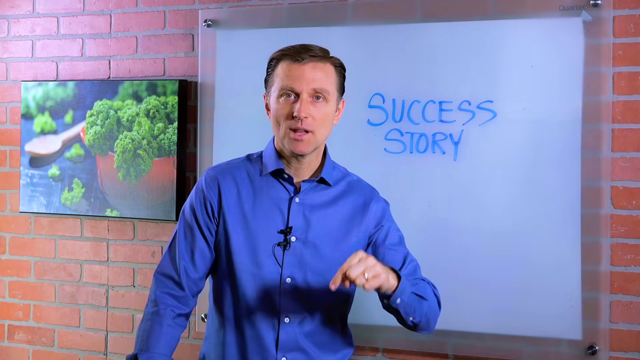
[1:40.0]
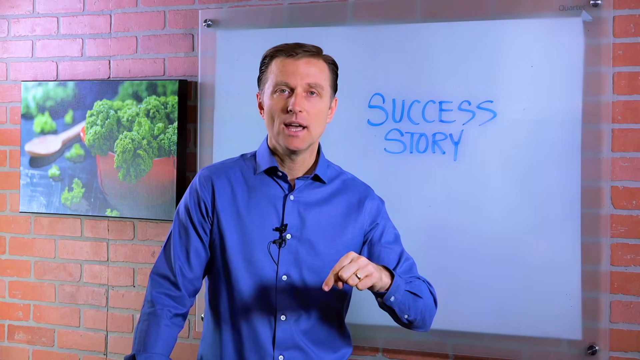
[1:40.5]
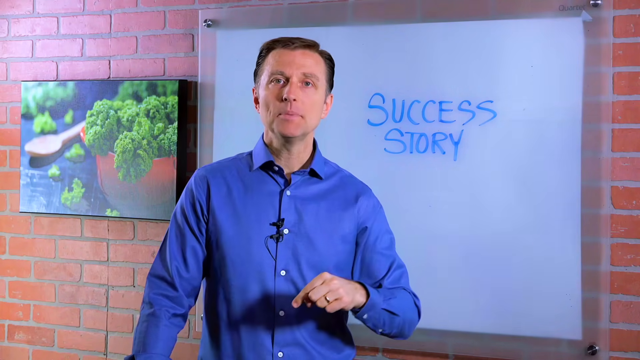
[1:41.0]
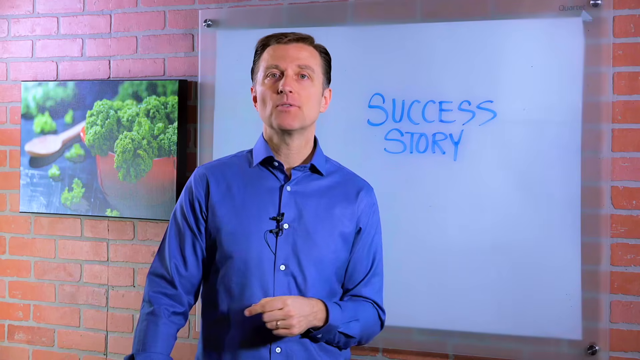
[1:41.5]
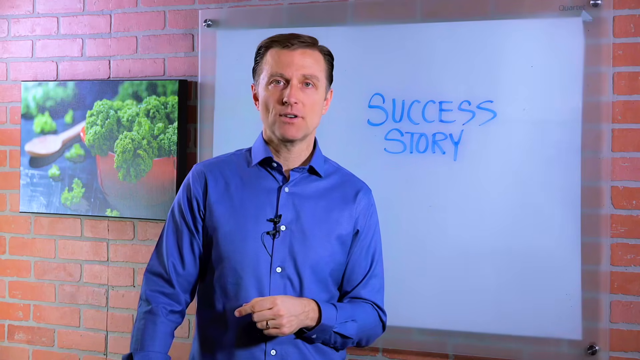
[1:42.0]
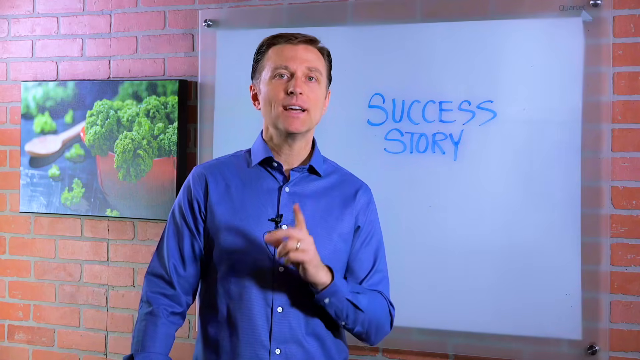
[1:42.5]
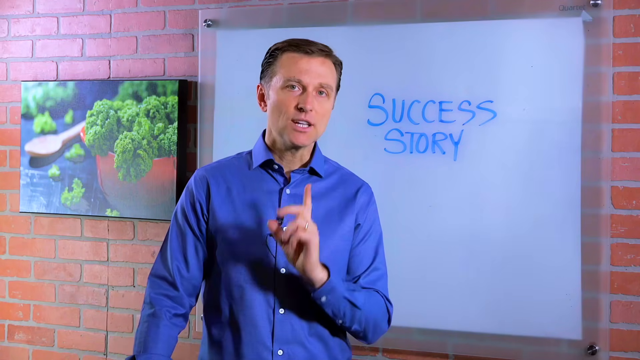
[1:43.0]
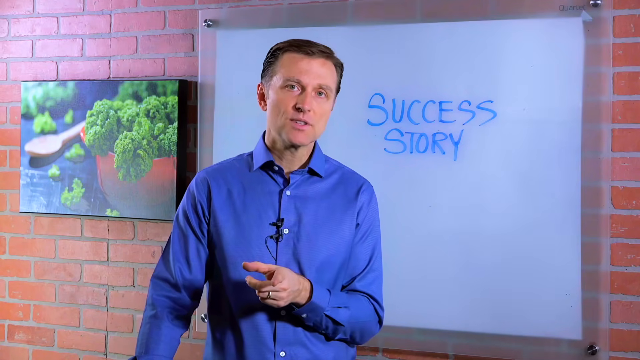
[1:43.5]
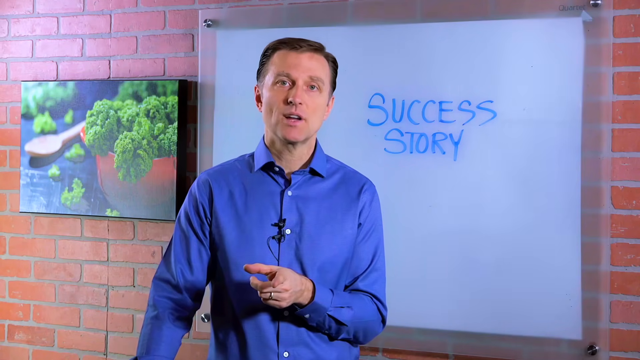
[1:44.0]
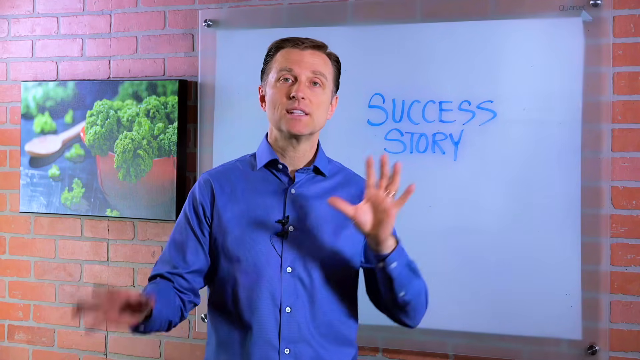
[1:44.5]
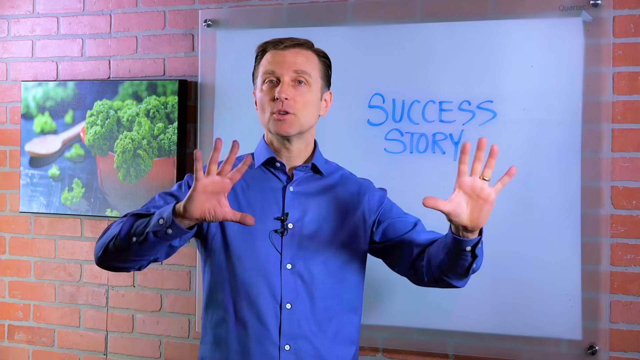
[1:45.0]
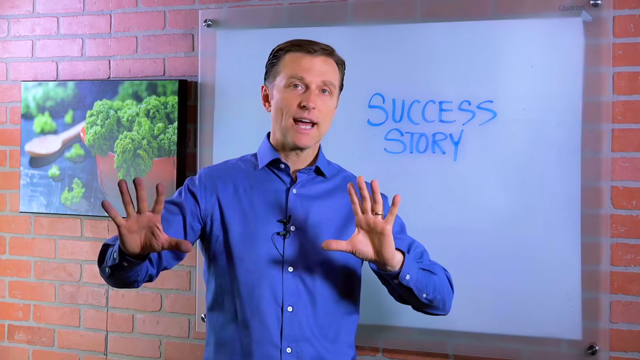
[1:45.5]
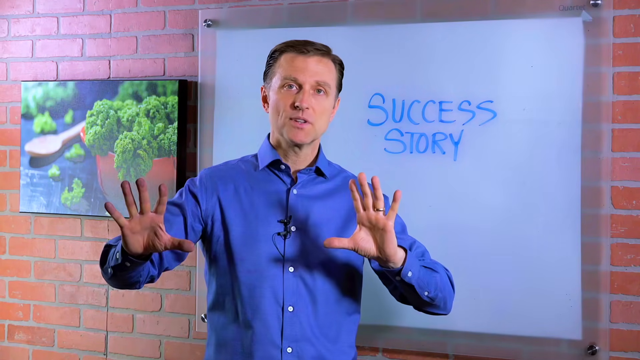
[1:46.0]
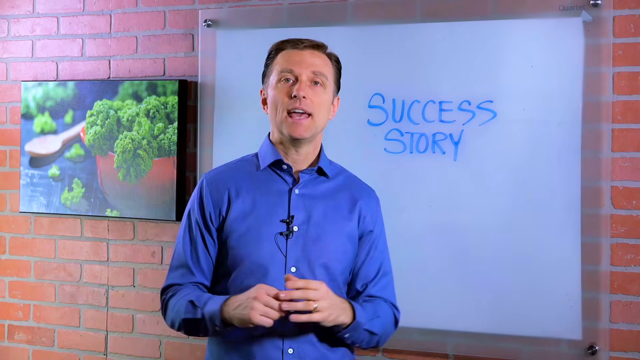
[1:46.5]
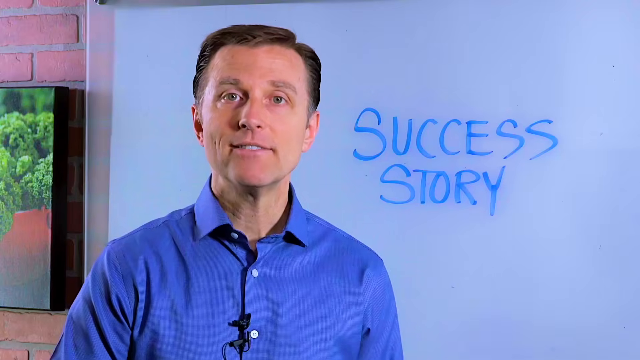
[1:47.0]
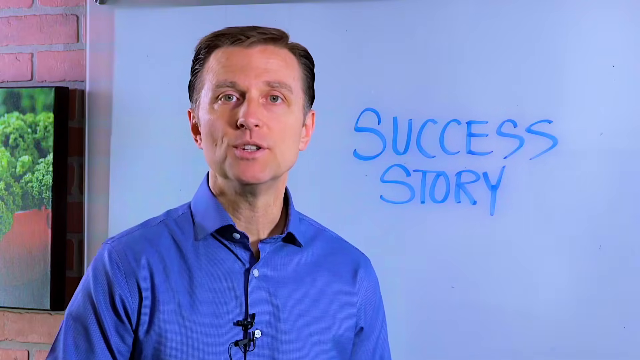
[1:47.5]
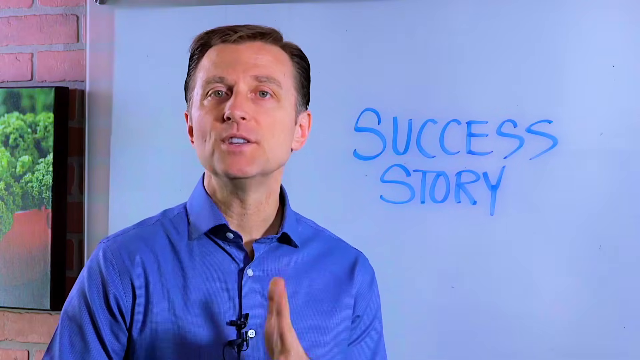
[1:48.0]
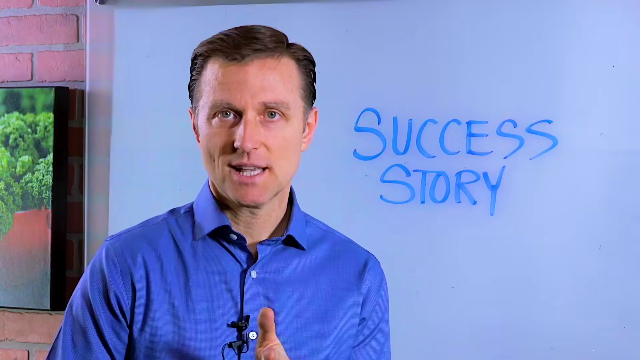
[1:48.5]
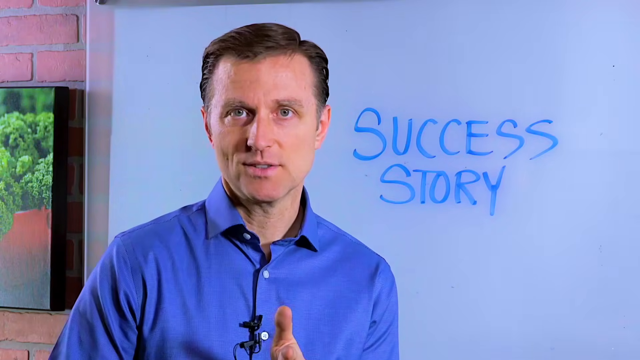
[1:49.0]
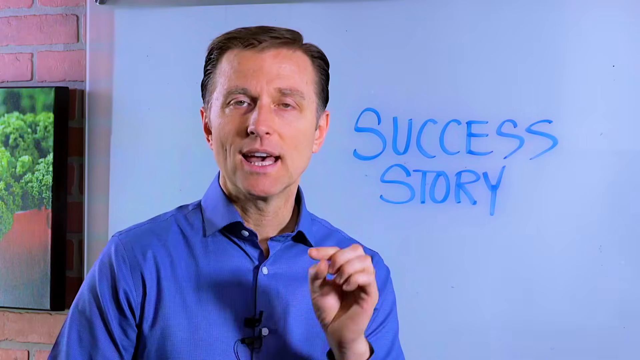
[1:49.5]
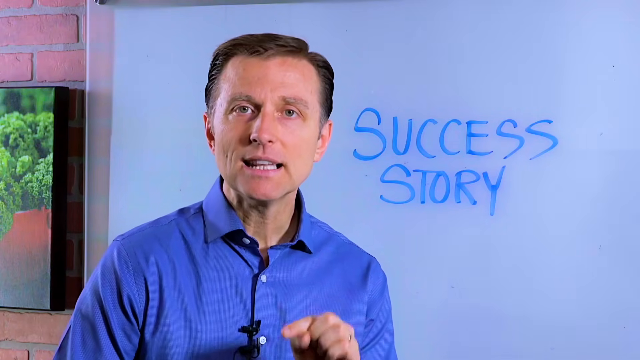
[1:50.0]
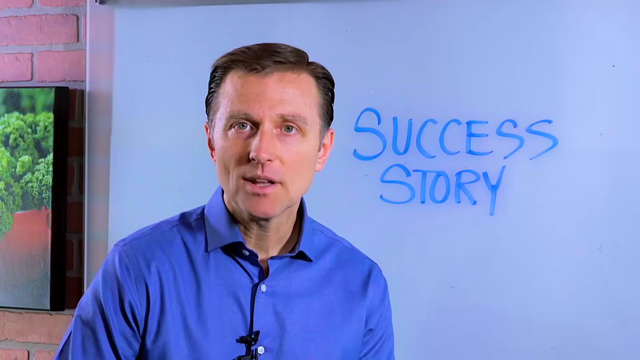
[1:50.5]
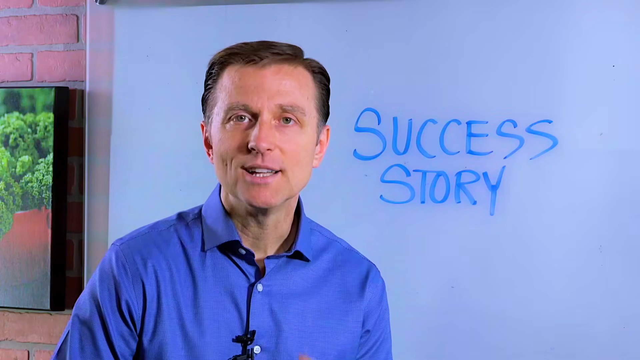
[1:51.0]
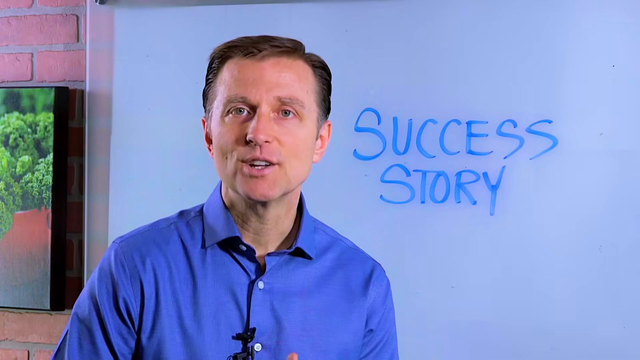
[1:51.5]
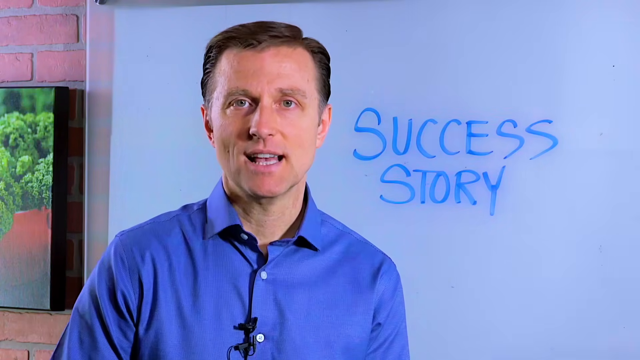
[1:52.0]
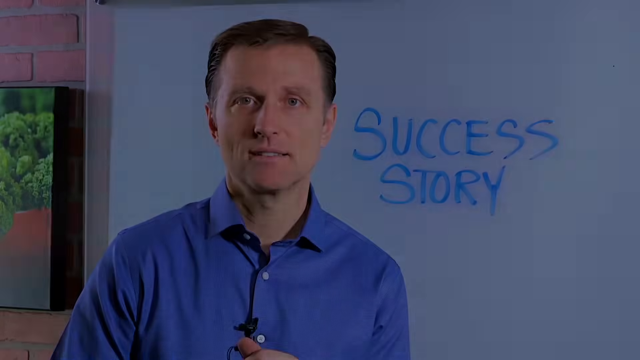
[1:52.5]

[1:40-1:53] A man in a blue shirt with a microphone in the middle of it speaks toward the camera. Behind him, on a brick wall, is a whiteboard with the words "success story" on it, and beside the whiteboard is a picture of green vegetables in a bowl, with the bowl and a wooden spoon on the table. The man points toward the ground, then points forward. He keeps speaking and moves his left and right hands left and right with his palms open. The view zooms in on his face as he continues talking and pointing forward, and the screen fades to black.